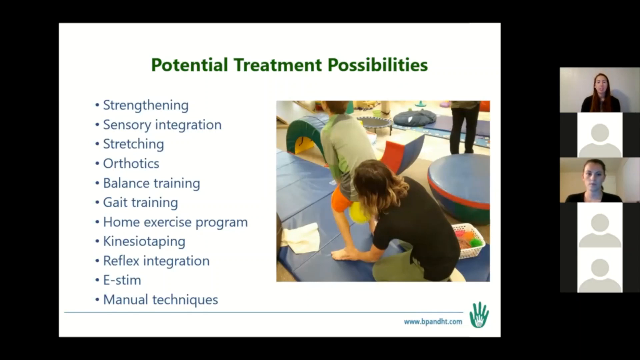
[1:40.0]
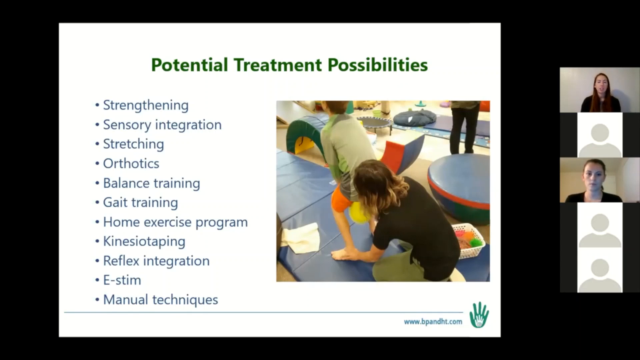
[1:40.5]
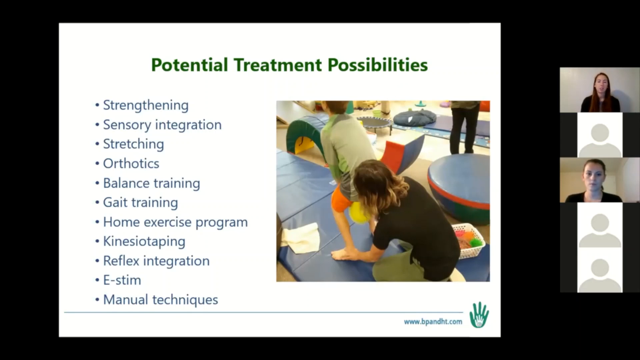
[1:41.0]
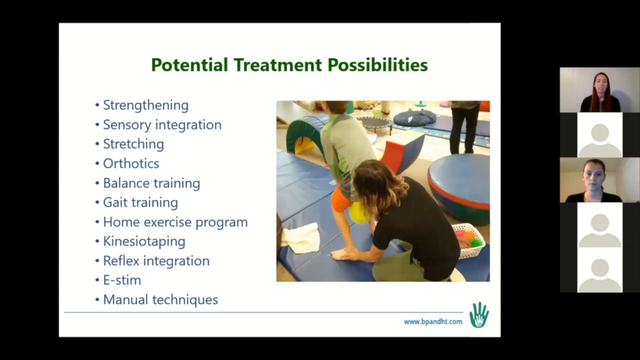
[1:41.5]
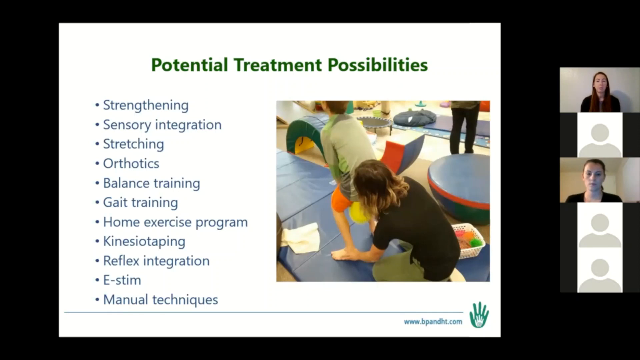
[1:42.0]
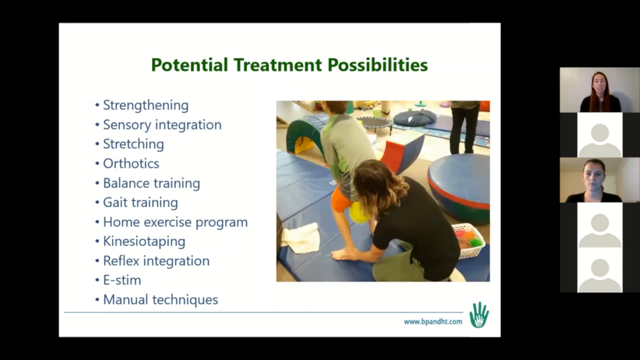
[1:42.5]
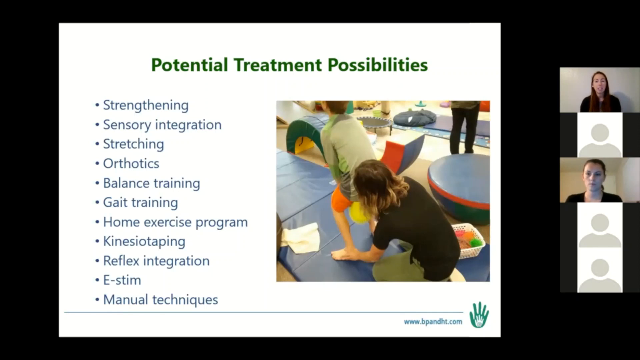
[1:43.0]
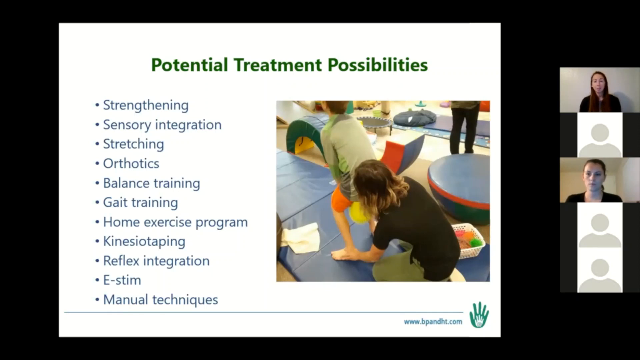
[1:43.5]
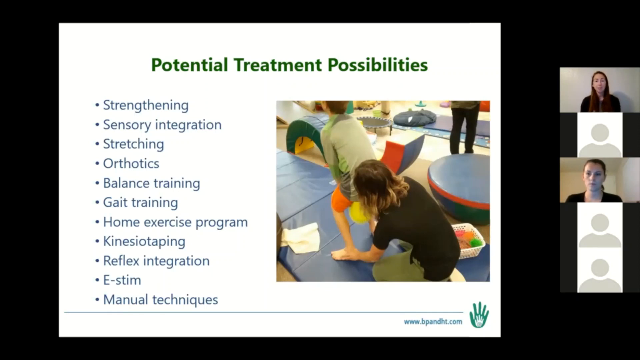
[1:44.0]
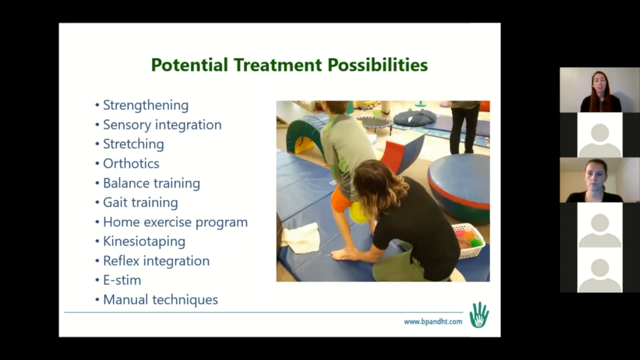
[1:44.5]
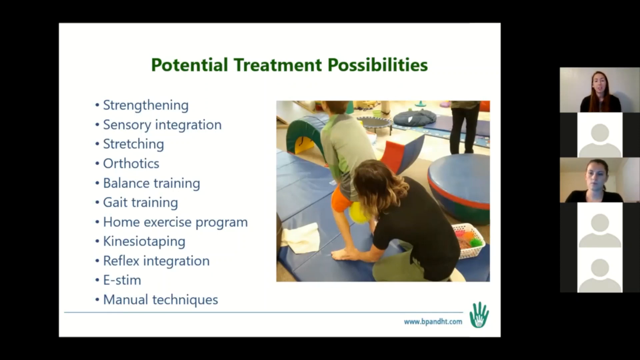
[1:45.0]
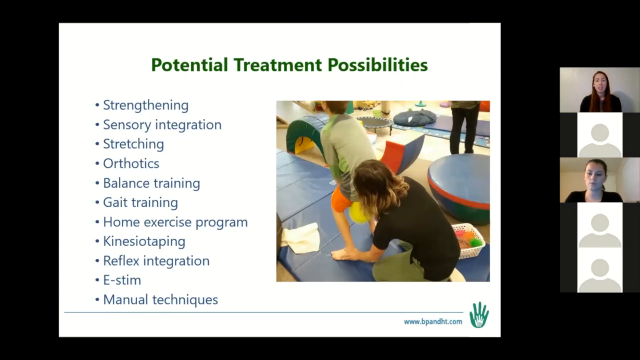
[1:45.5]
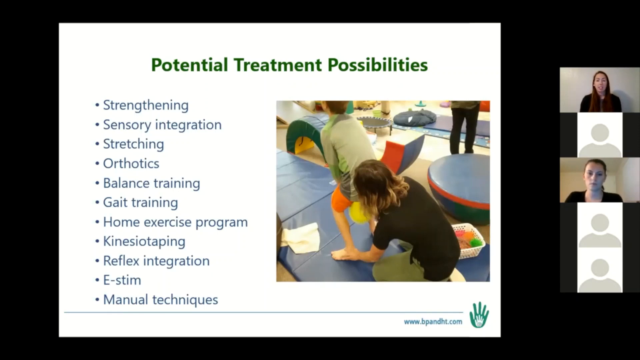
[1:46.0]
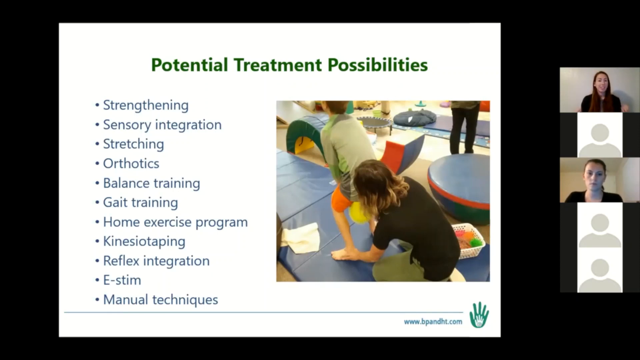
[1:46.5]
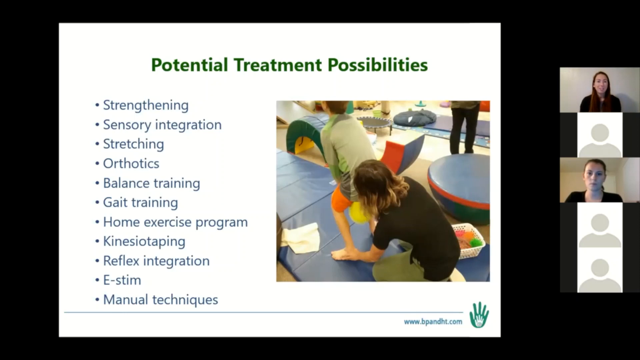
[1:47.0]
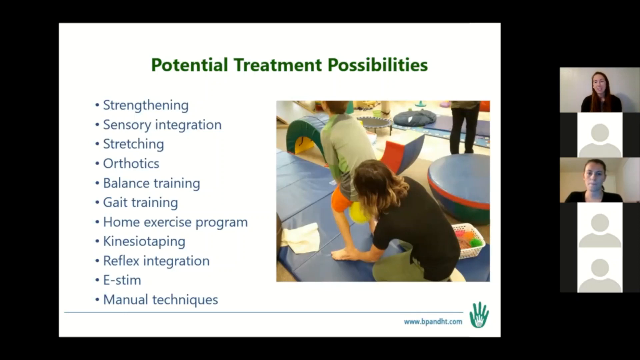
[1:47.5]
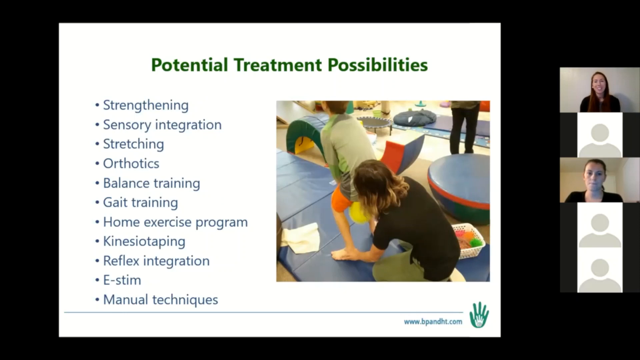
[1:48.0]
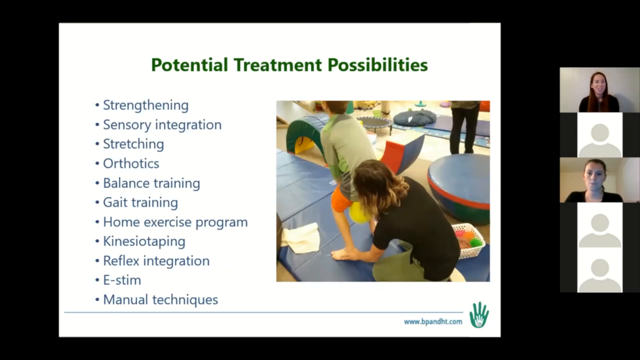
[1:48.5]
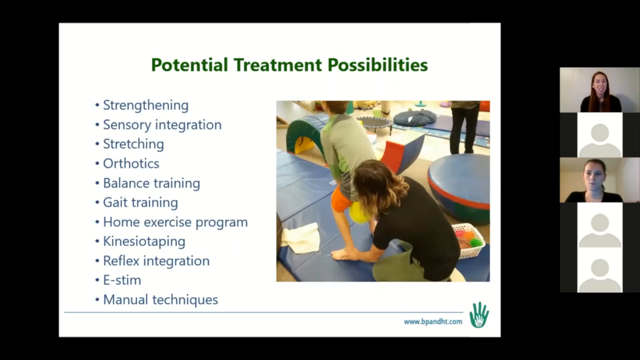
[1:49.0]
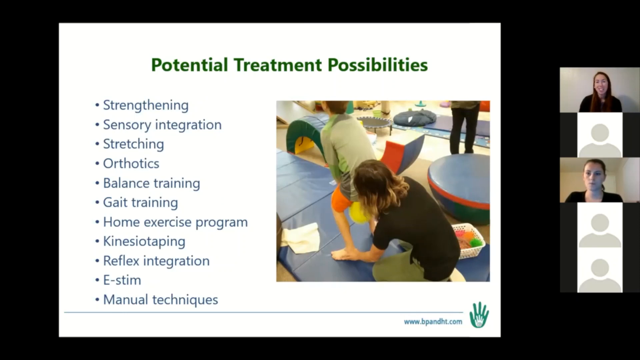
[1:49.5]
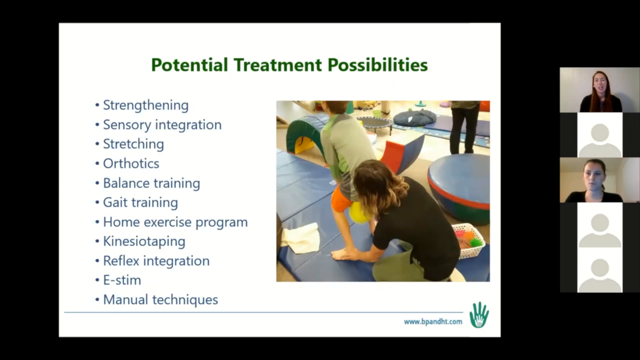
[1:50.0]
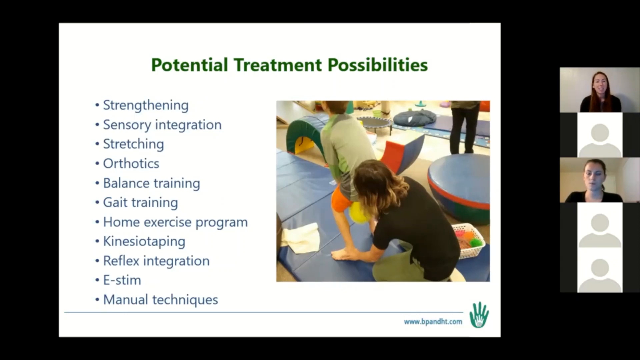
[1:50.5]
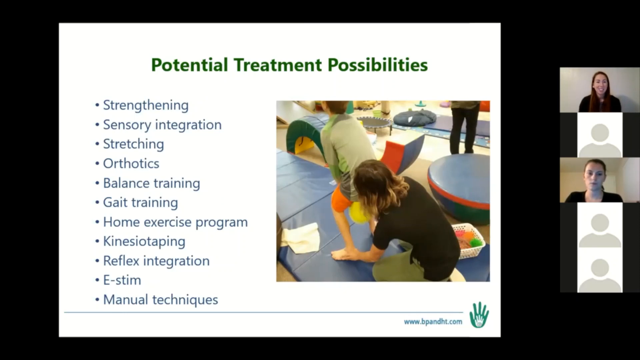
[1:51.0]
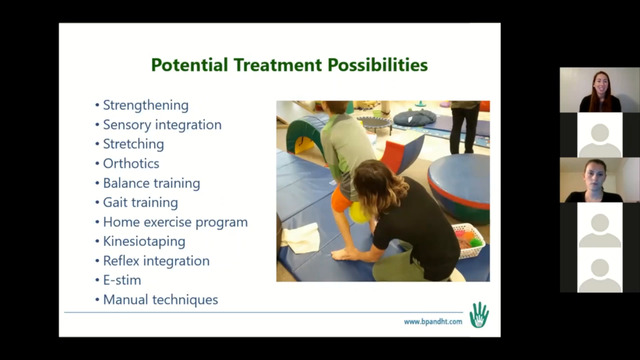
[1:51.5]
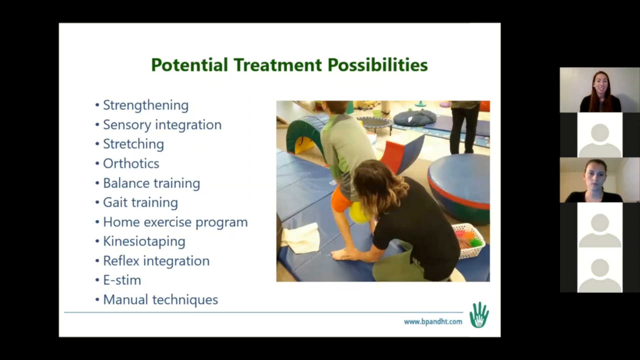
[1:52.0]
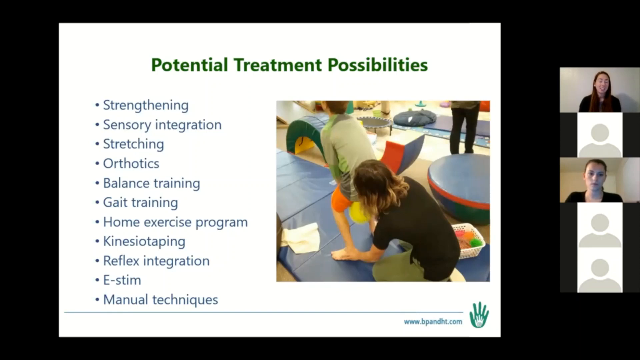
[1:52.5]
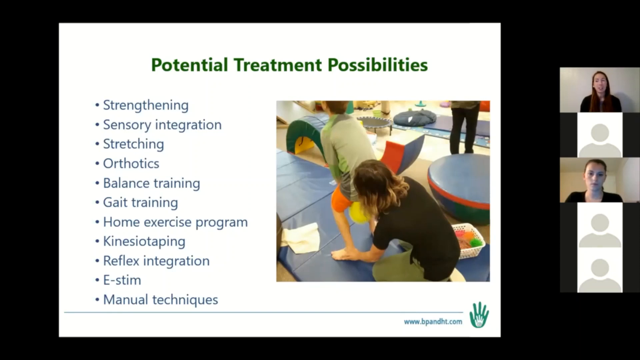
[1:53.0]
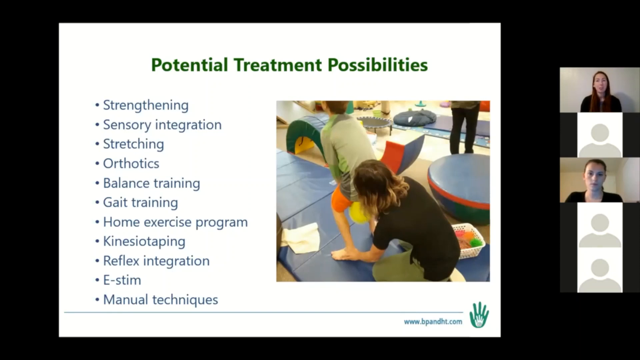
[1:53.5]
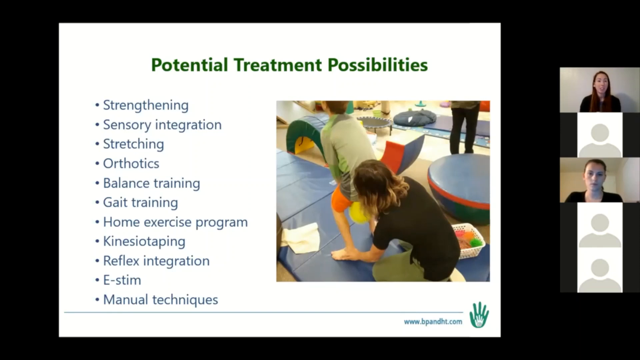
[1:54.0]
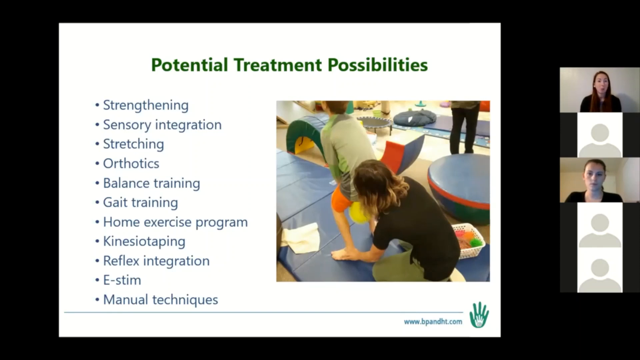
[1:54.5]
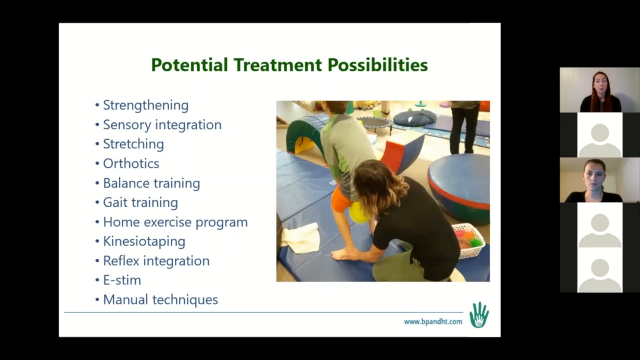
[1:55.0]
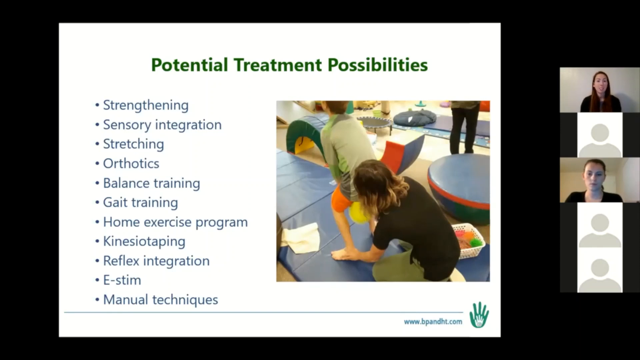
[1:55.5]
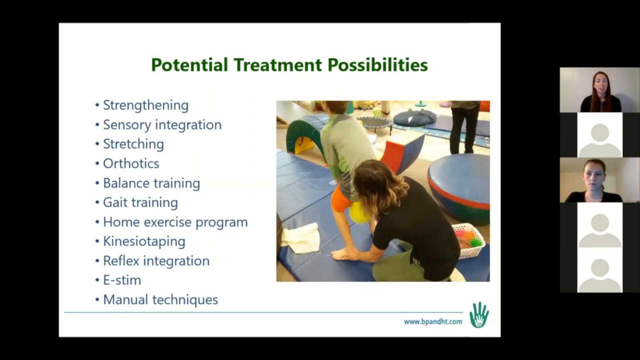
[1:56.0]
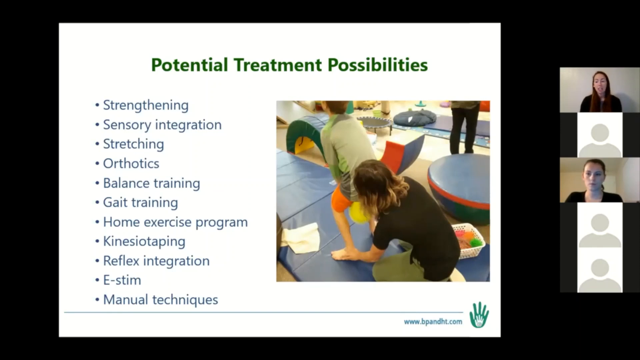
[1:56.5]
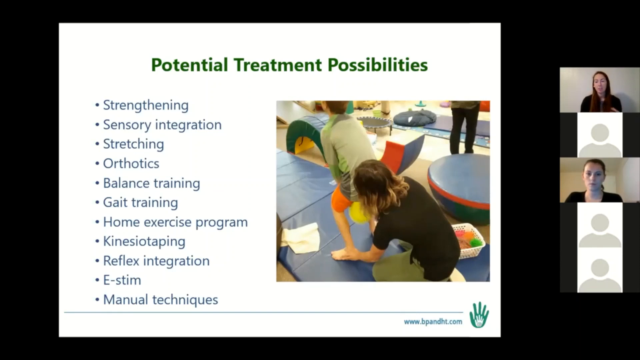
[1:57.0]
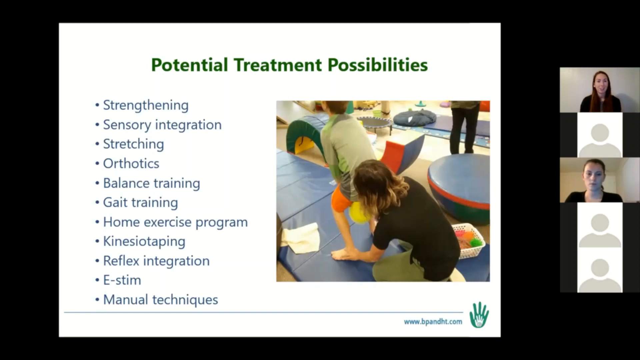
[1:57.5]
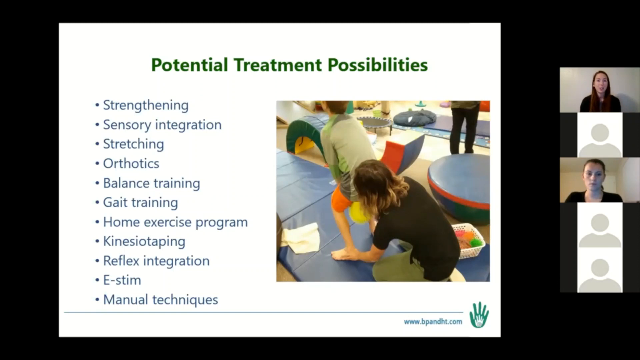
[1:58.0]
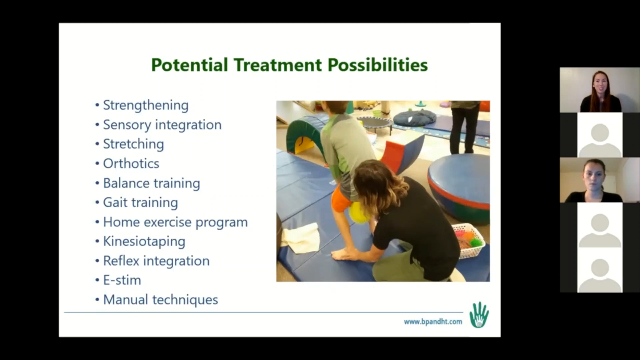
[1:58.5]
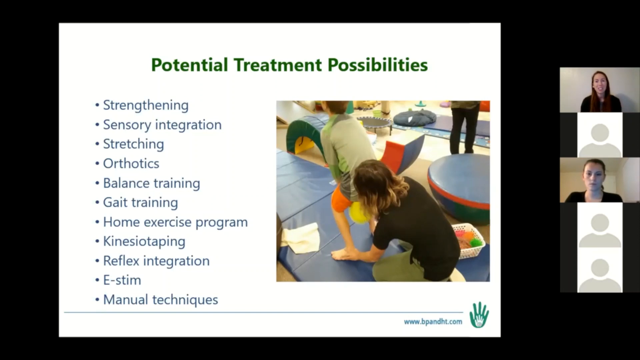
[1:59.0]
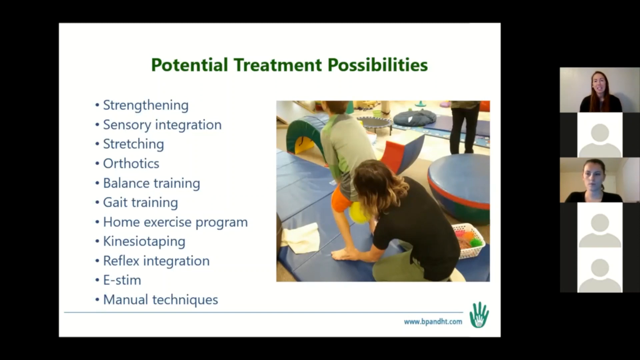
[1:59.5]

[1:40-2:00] A live video conference is on the screen, with participant icons arranged vertically along the right side and a black background. A slide with a white background occupies most of the screen, headed "potential treatment possibilities". On the right side of the slide is a colorful image of a woman kneeling beside a boy who is standing on a blue mat; his knees are bent and she is touching his ankles from behind, and other colorful items are on the ground beside the mat. The treatment possibilities are listed as bullet points to the left of the image, including strengthening, stretching, balance training, gait training and manual techniques among others, about 10 in all.